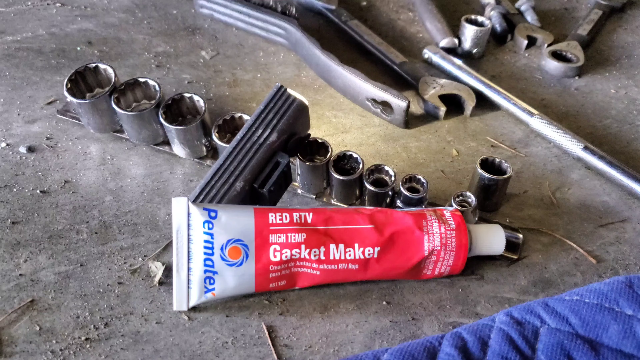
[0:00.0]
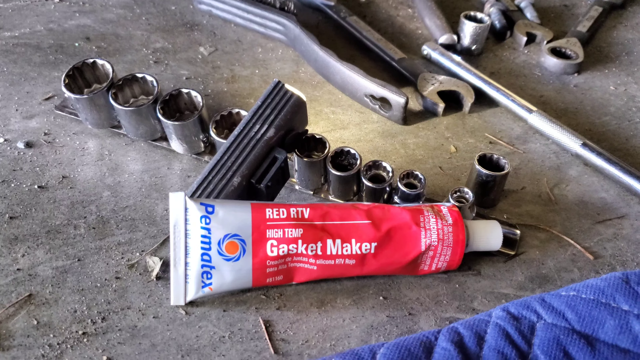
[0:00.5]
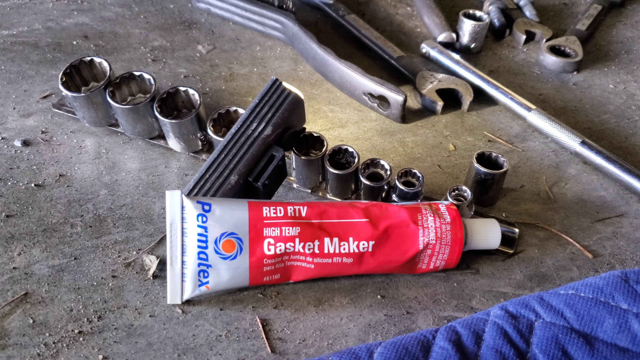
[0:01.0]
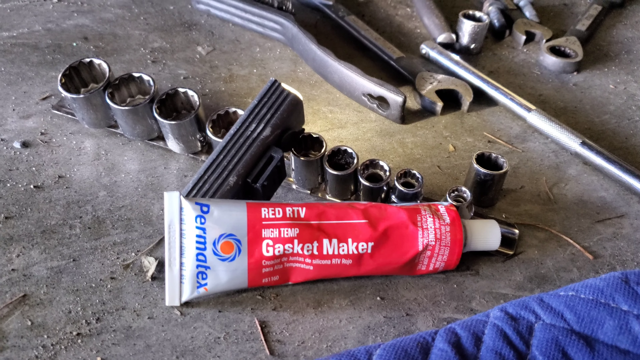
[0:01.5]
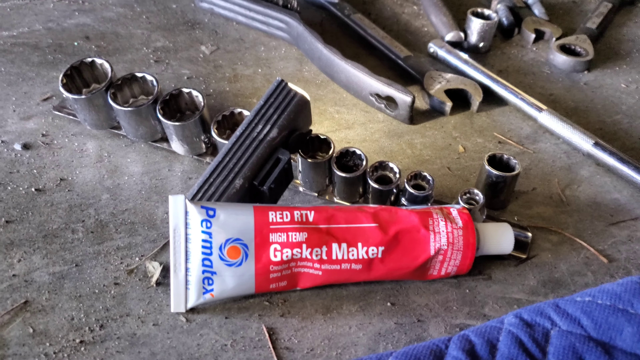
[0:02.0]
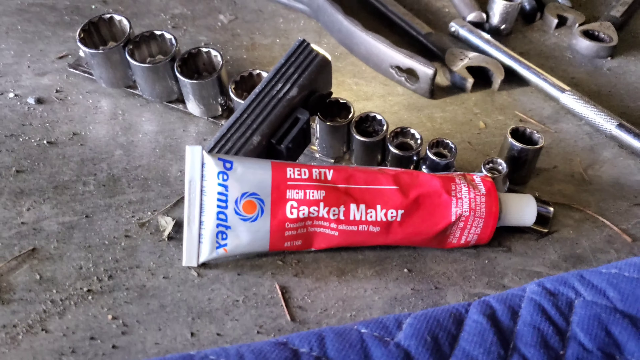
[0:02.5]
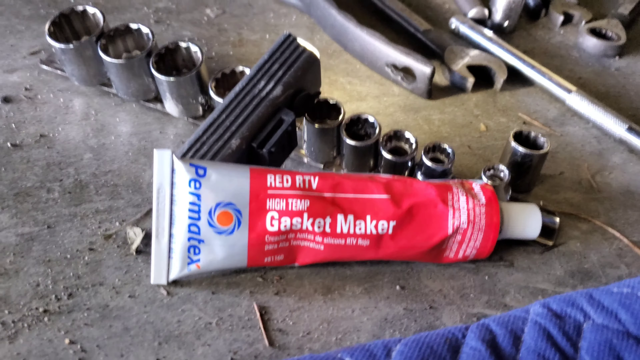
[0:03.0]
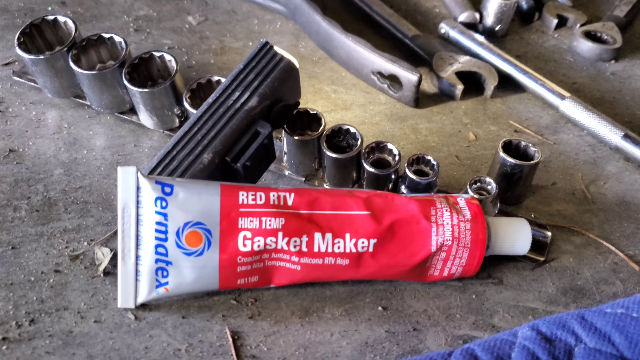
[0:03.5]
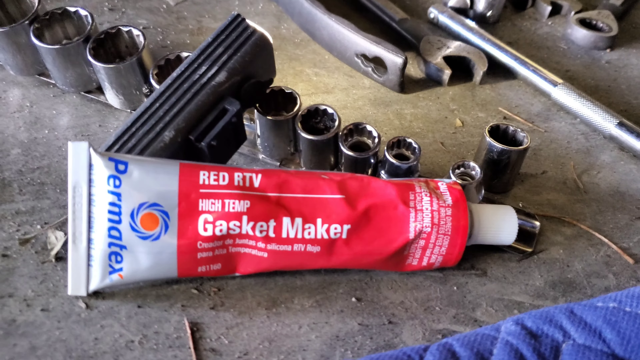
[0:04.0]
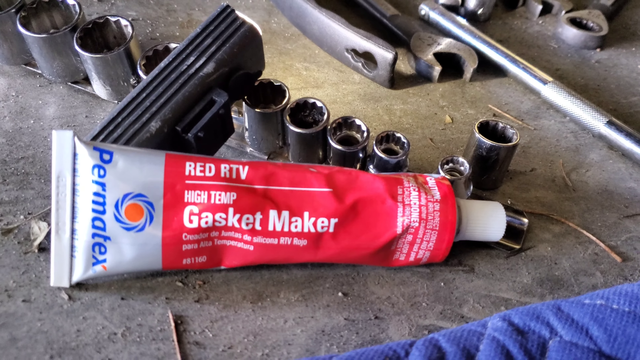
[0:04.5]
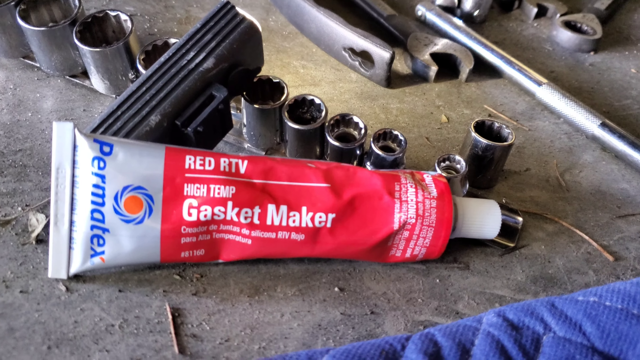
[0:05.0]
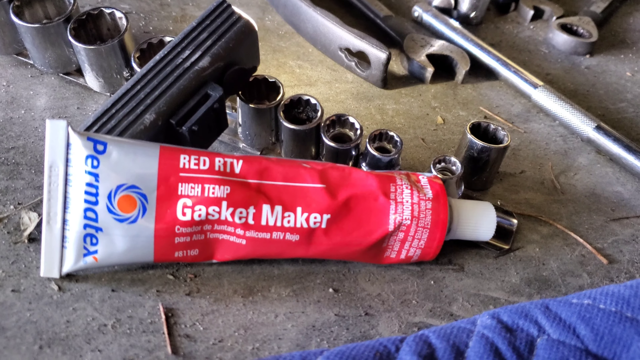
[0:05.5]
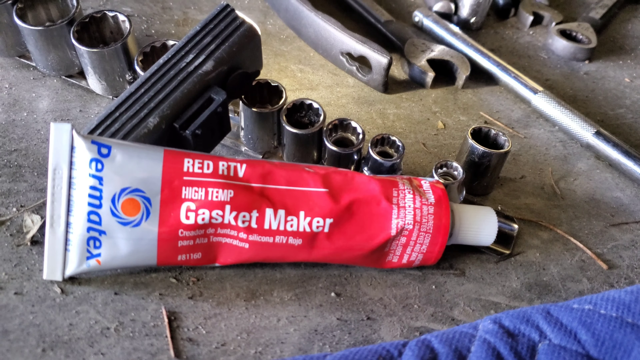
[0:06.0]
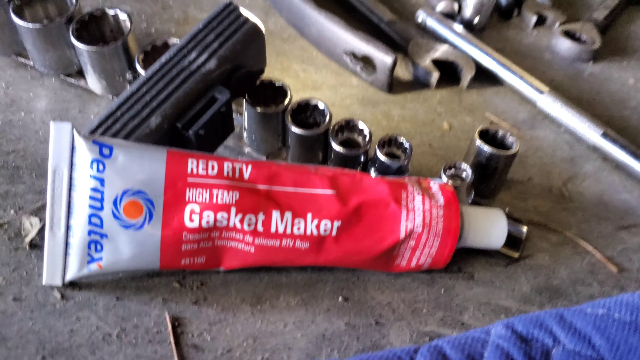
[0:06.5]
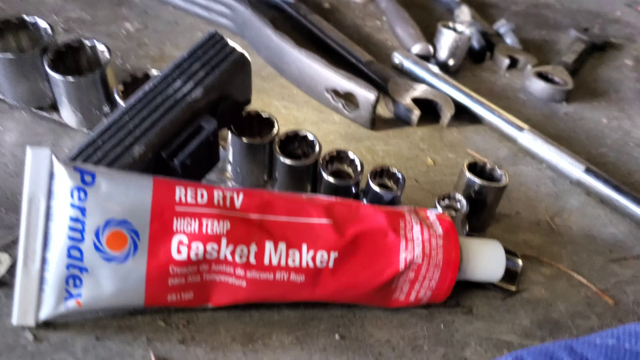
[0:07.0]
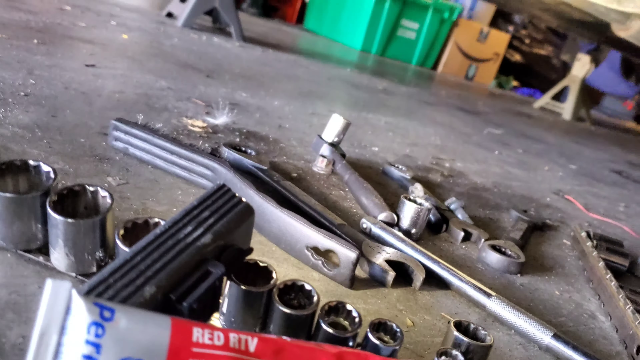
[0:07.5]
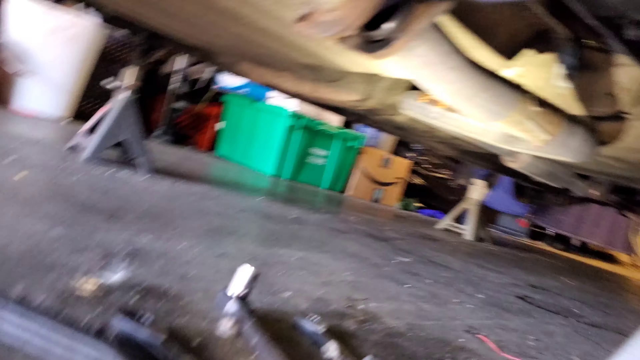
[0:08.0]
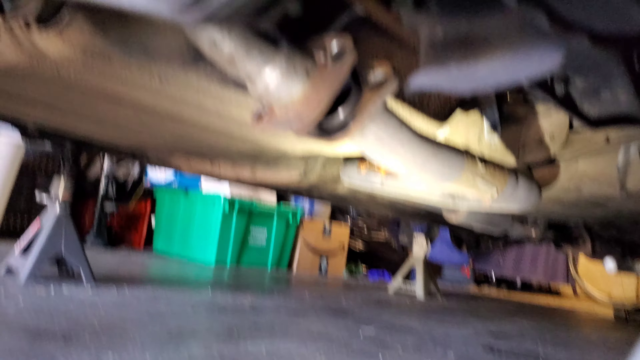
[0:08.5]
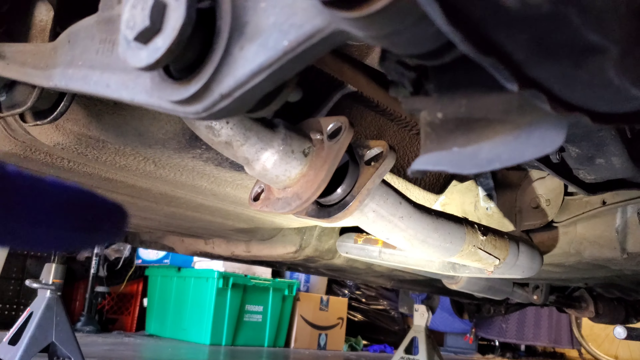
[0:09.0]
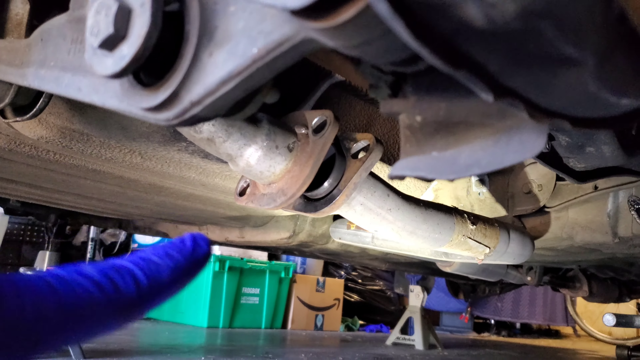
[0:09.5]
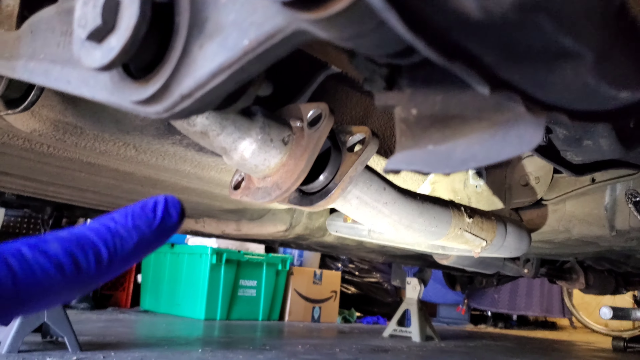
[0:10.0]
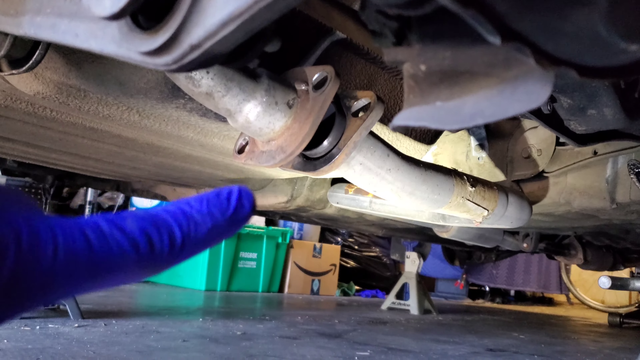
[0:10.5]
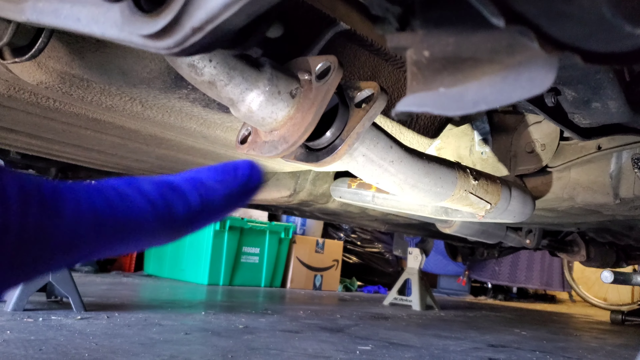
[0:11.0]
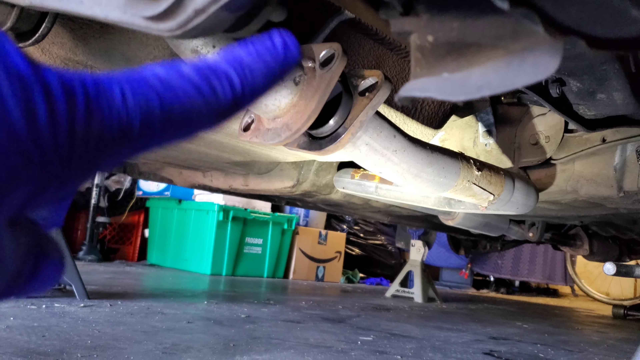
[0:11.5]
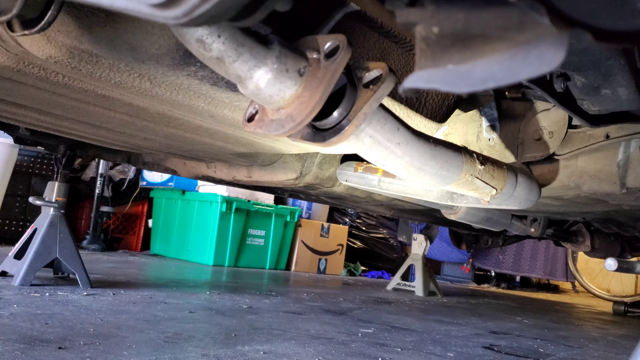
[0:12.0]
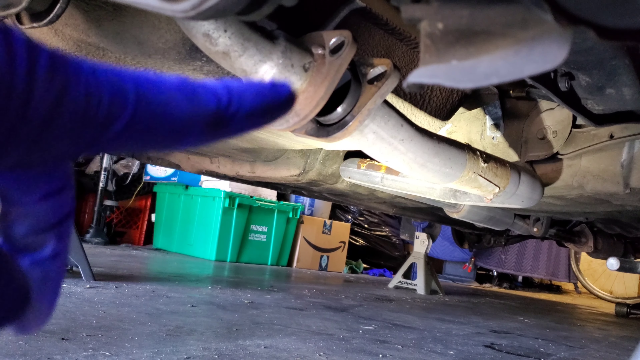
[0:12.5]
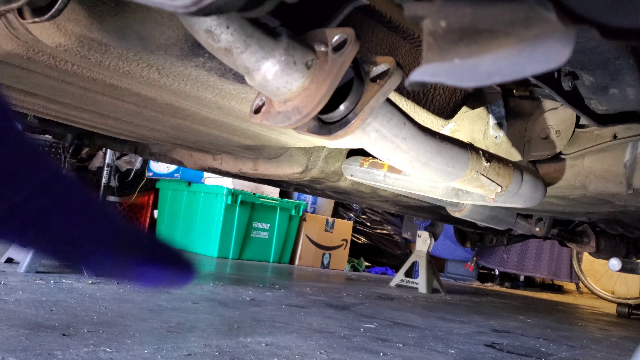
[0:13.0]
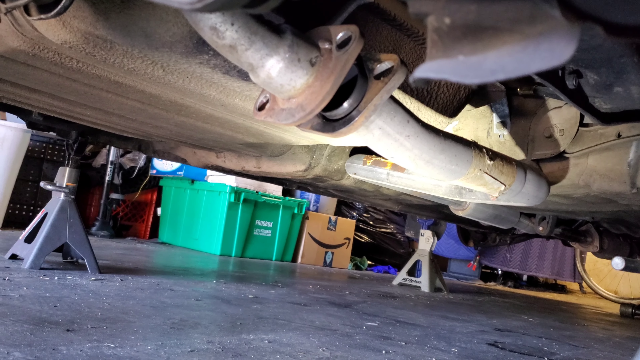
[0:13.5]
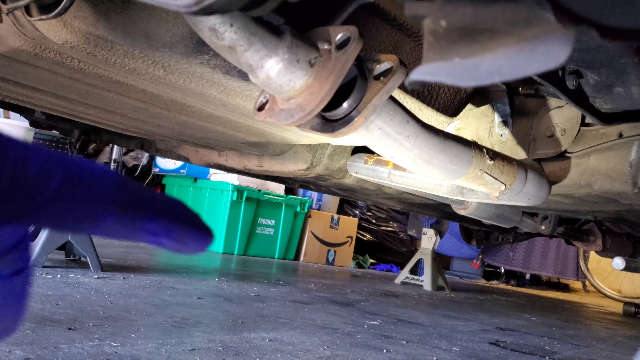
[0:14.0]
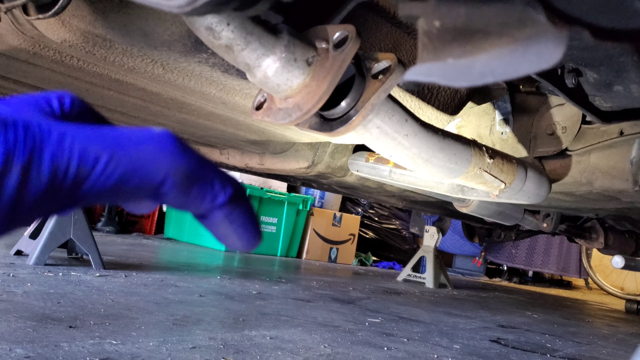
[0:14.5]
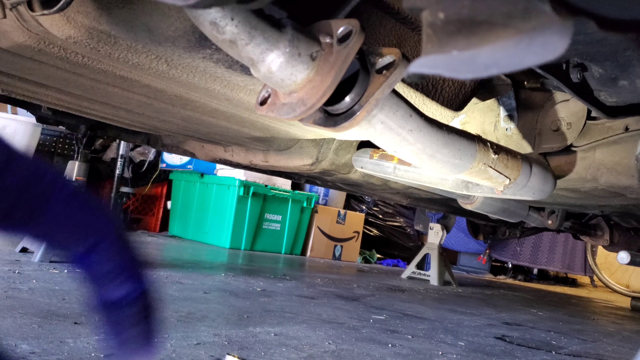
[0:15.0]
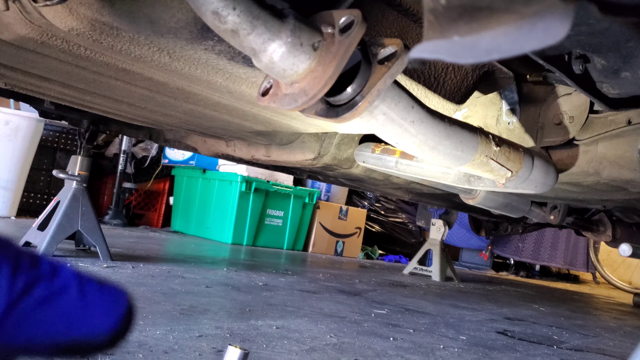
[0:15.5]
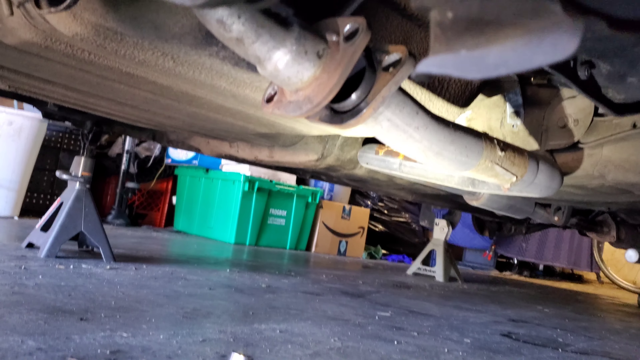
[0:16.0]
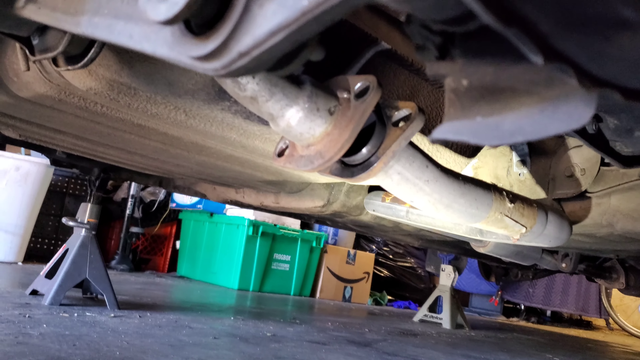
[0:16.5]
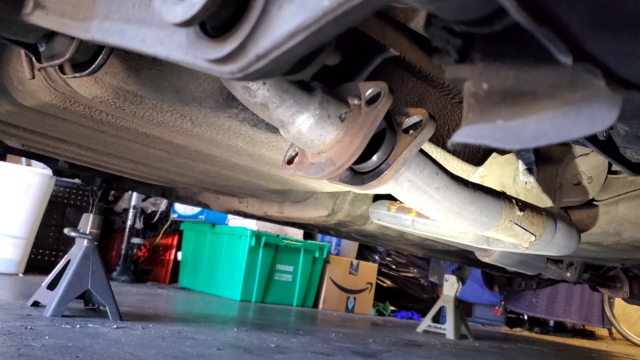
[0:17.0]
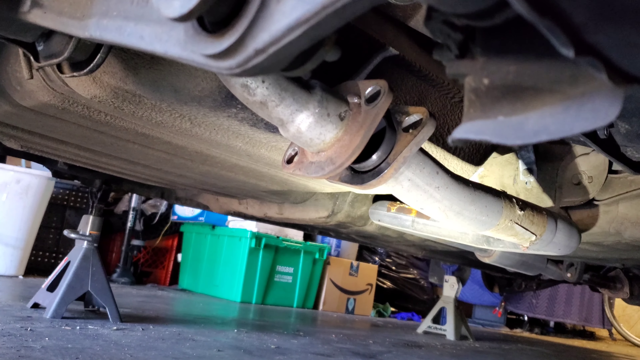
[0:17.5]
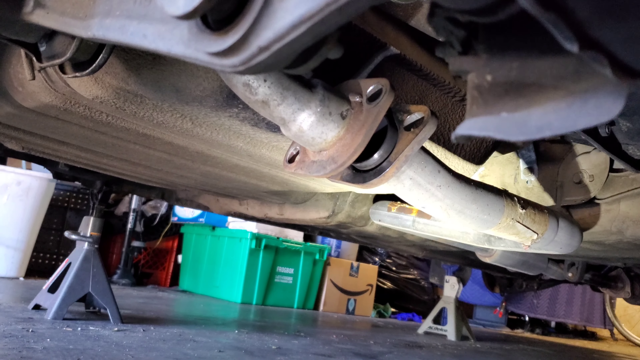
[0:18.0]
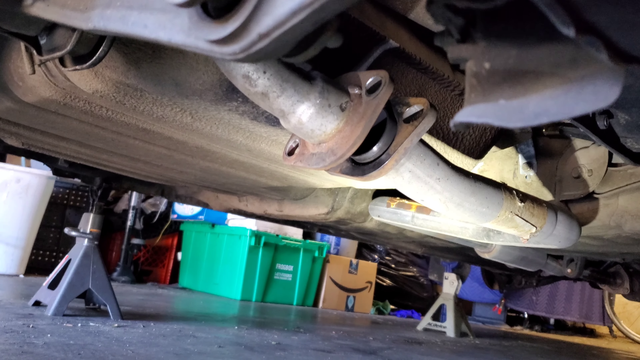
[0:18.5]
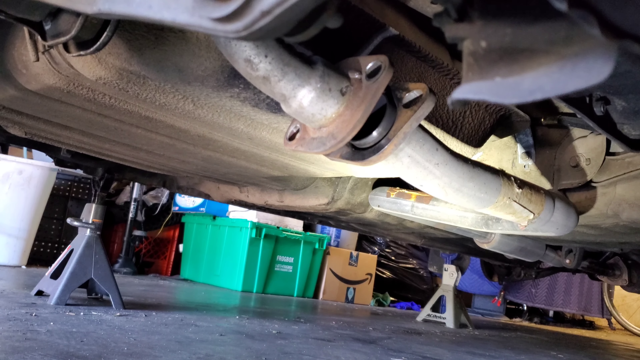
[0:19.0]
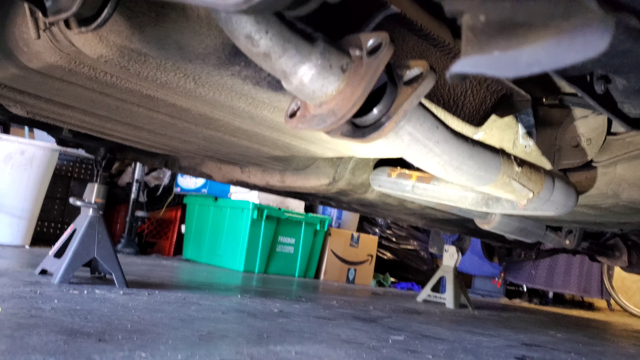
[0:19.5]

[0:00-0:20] A desk or workbench is covered in lots of bits of metal and dust. On it is a red tube with the words "gasket maker" written on it, along with other writing saying "red RTV", and it has a white screw cap. The tube is sitting on the table next to a set of sockets, 10 of them in a line from the tallest to the smallest. There are also a few different sized spanners on the table and a thin metal pipe. The view then goes up, showing that the camera is lying underneath a vehicle of some kind. Someone with a blue glove on their hand points at a particular section of the car. The car is raised off the ground with four triangular jacks. The tube of gasket maker also says the words "Permatex" and "high temp", and it seems to be a specialised product.